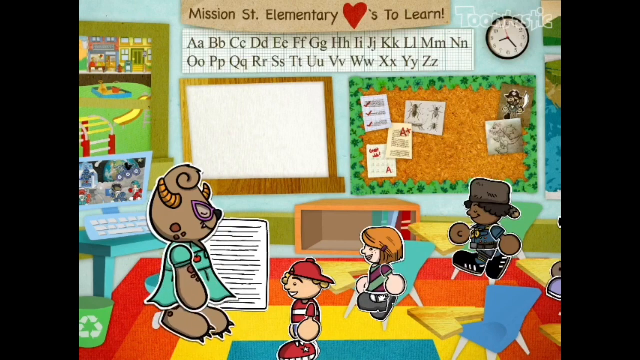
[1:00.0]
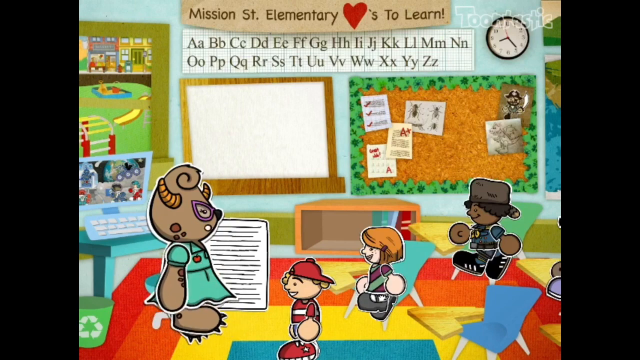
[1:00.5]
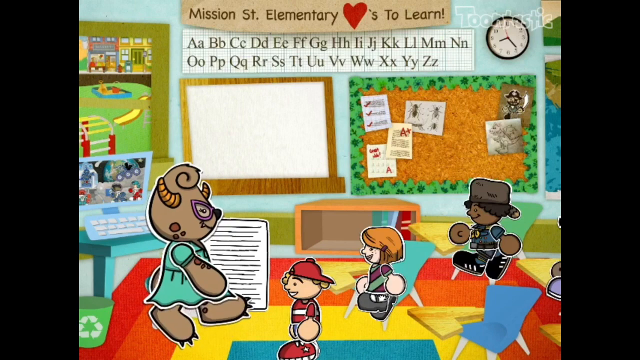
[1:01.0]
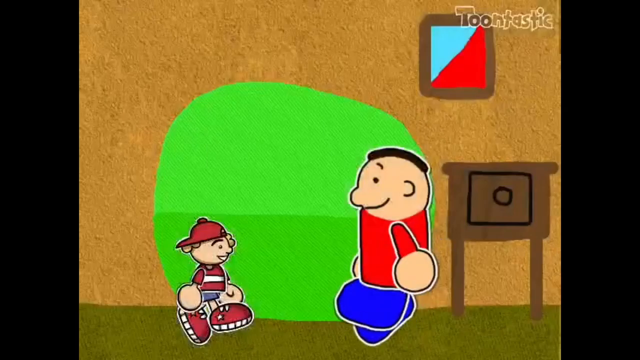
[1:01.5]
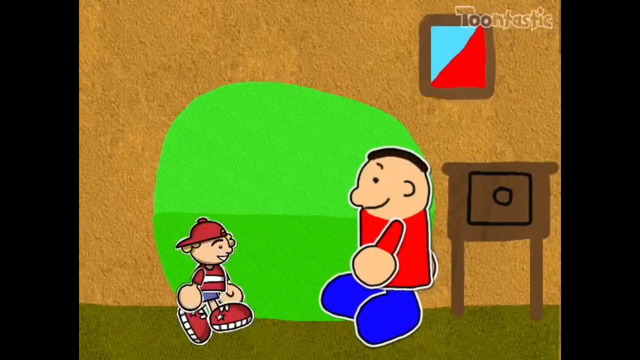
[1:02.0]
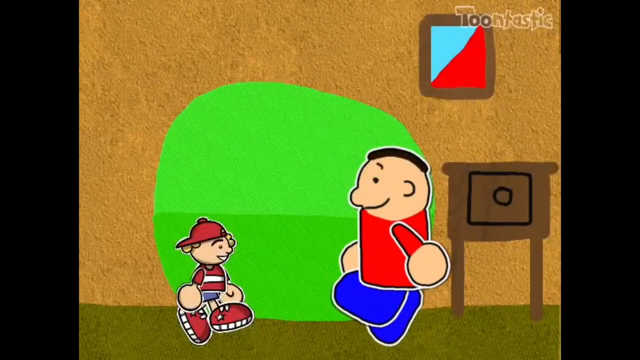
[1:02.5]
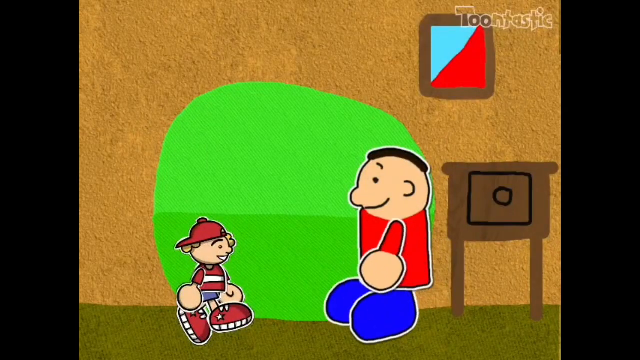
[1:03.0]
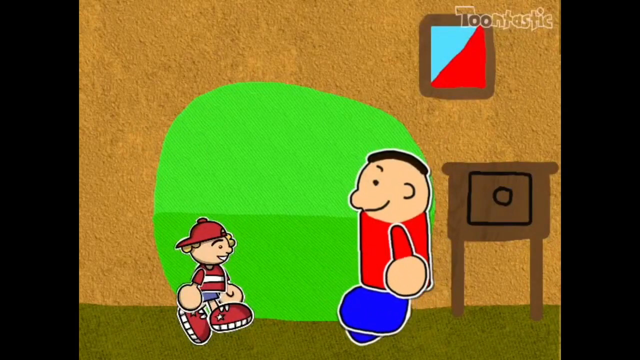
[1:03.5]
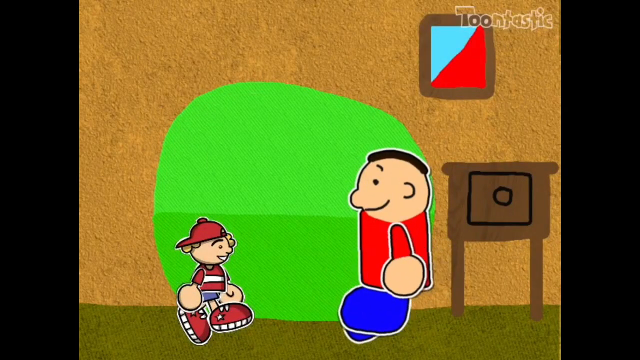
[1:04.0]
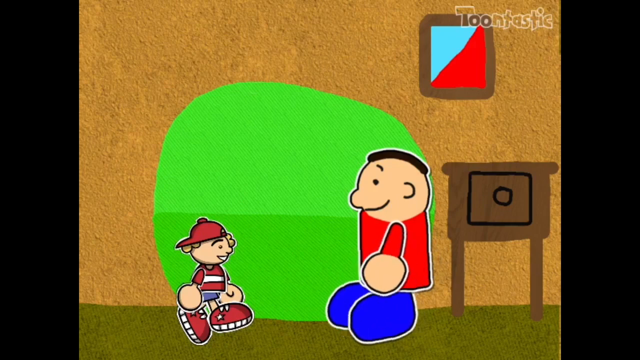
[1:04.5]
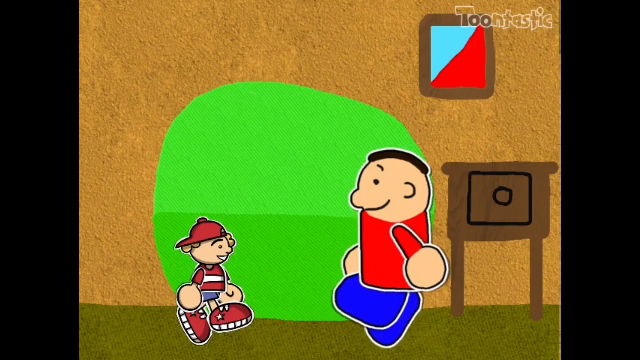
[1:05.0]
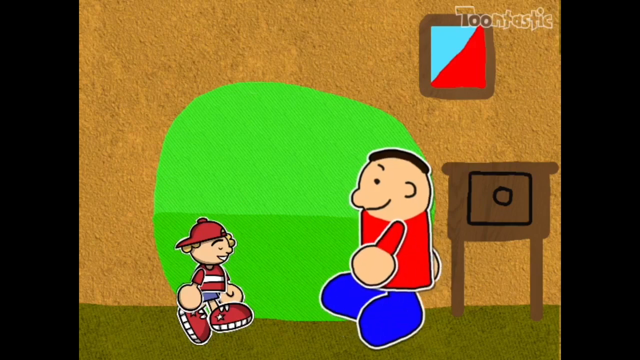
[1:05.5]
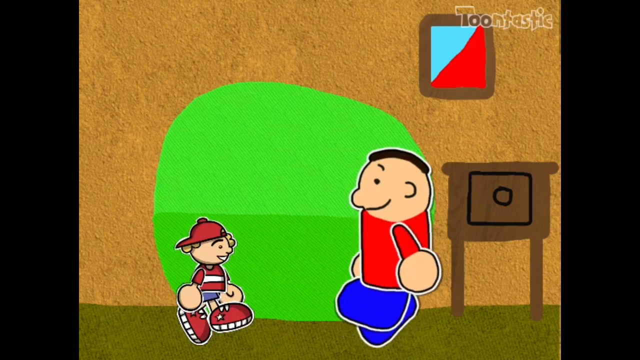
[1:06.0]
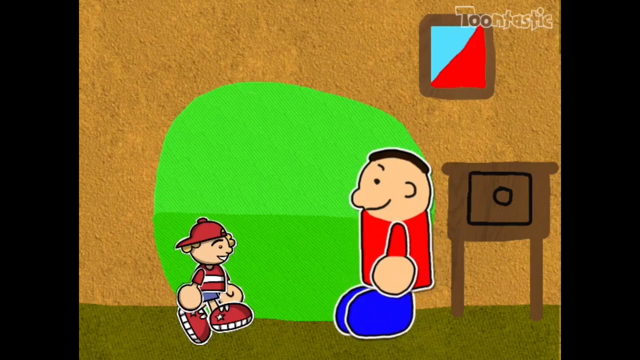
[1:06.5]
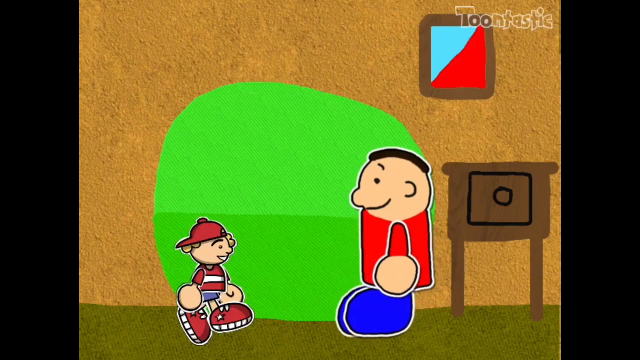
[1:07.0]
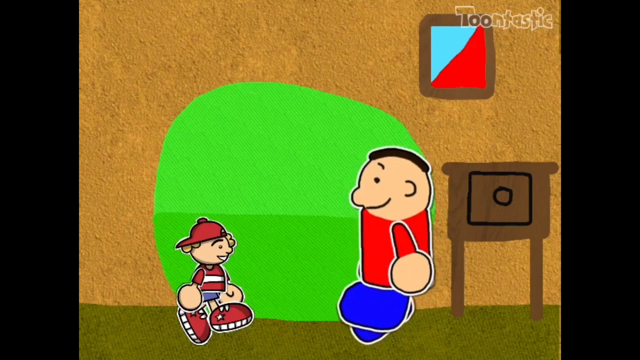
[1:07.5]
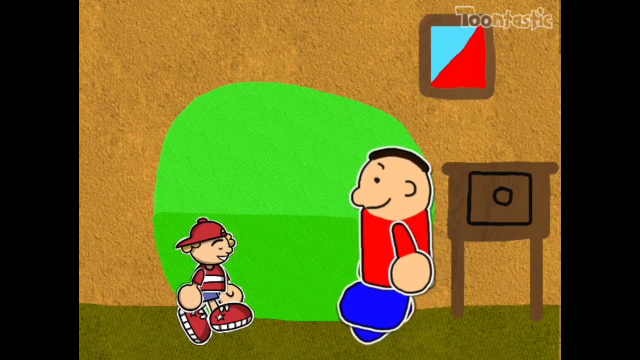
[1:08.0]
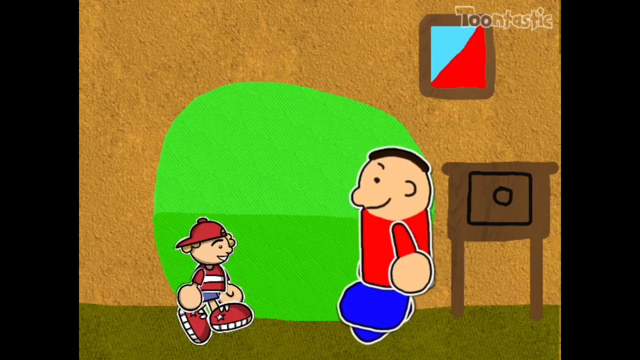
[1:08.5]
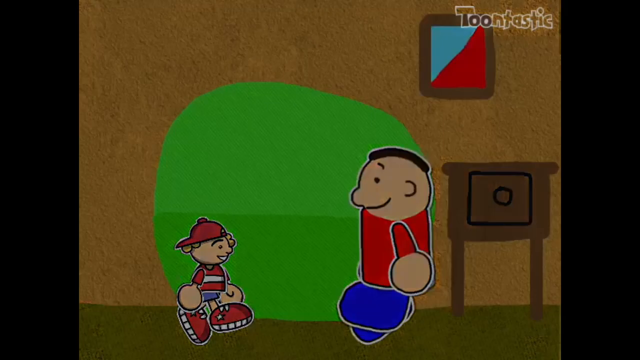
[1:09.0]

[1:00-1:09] The children are sitting down, and the scene changes to a different image of the education center showing a very large child in a red shirt with what appear to be very big shoes. This child is massive compared to the child with red hair, about three times his height. Next to the child with red hair appears to be a drawer with a handle, and a square picture with a diamond shape, half blue and half red. The two children appear to be talking as they move in place.